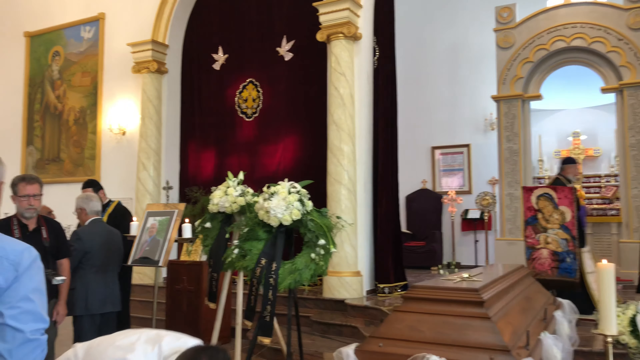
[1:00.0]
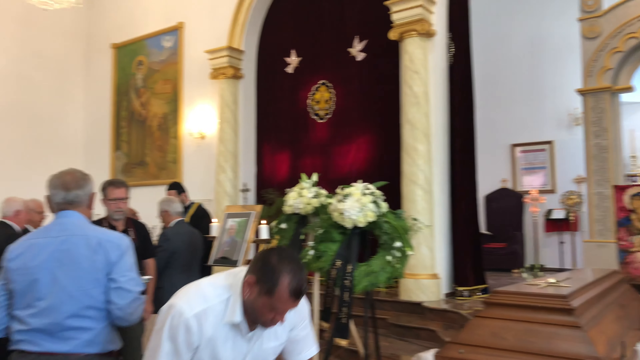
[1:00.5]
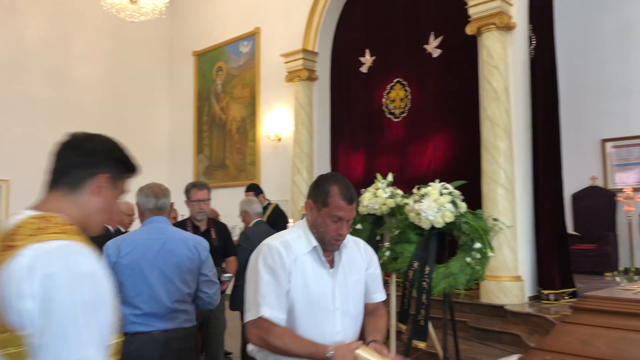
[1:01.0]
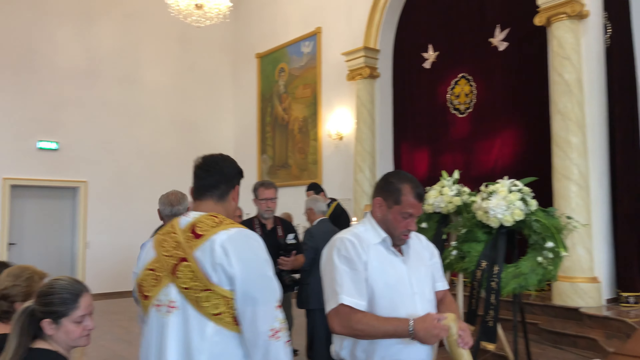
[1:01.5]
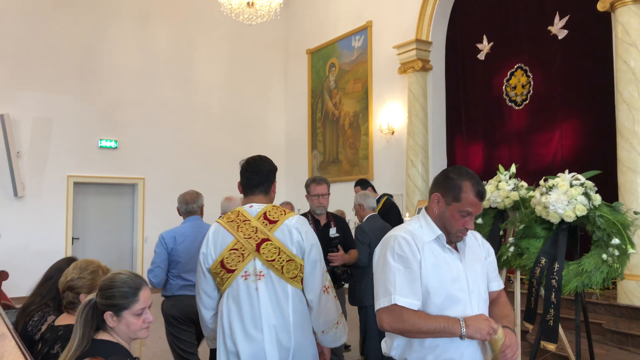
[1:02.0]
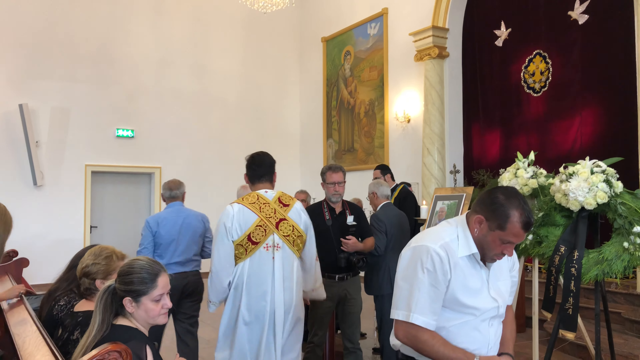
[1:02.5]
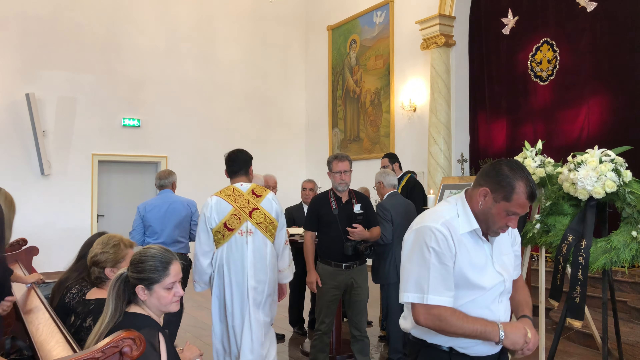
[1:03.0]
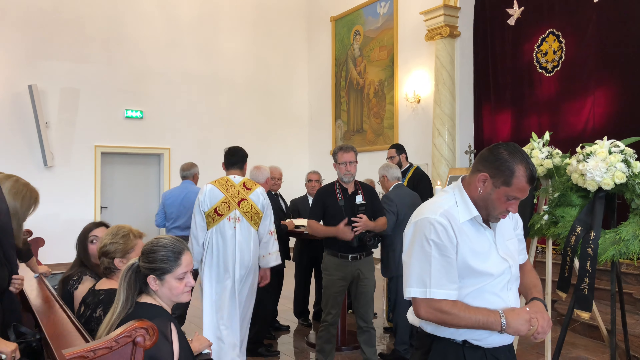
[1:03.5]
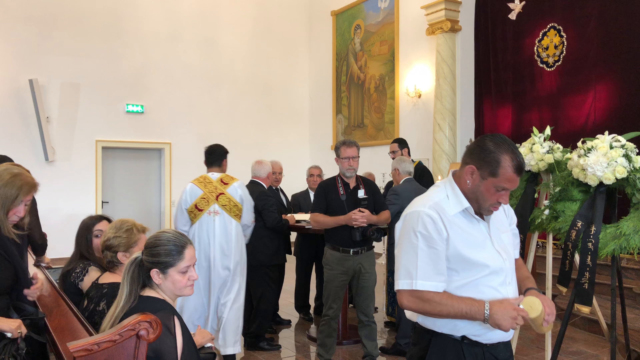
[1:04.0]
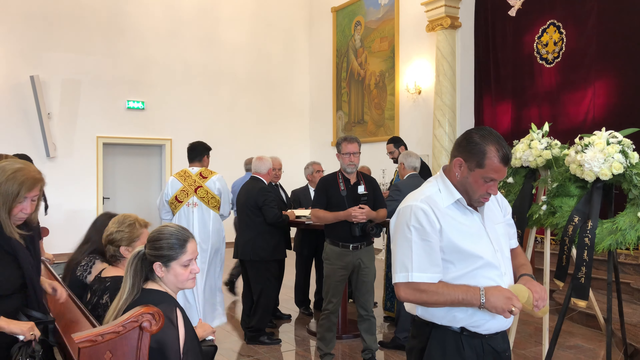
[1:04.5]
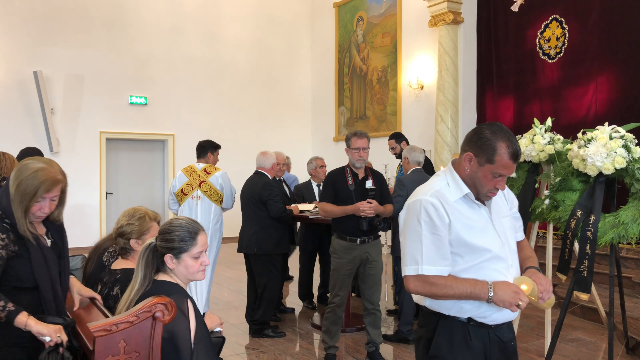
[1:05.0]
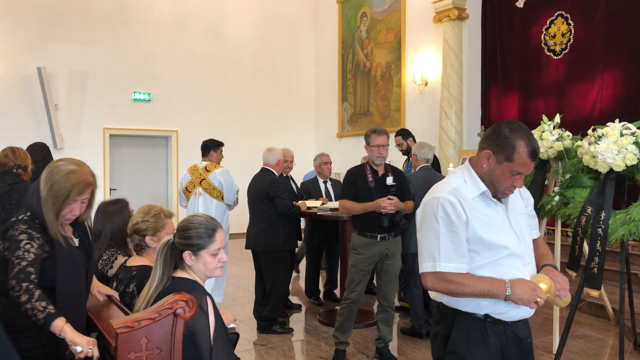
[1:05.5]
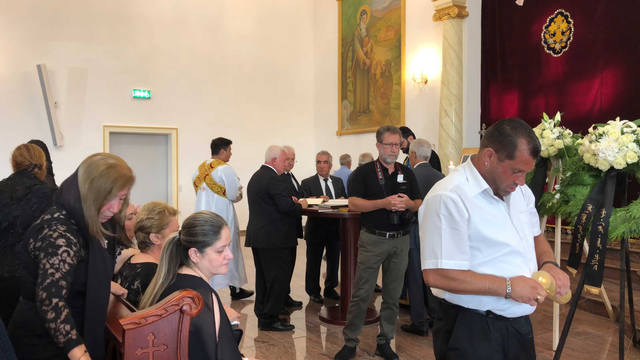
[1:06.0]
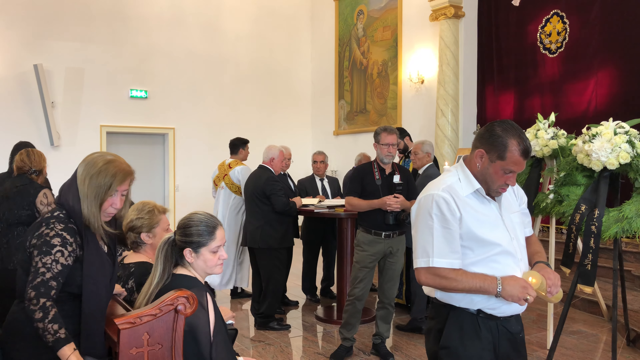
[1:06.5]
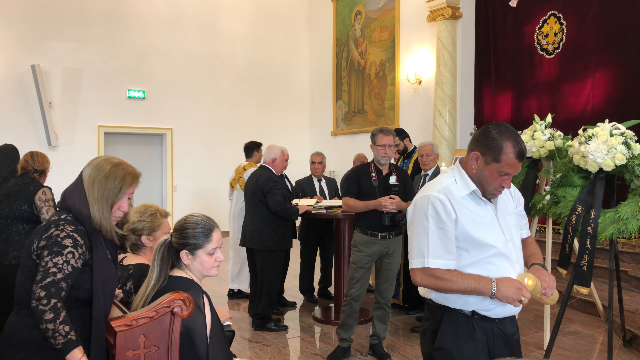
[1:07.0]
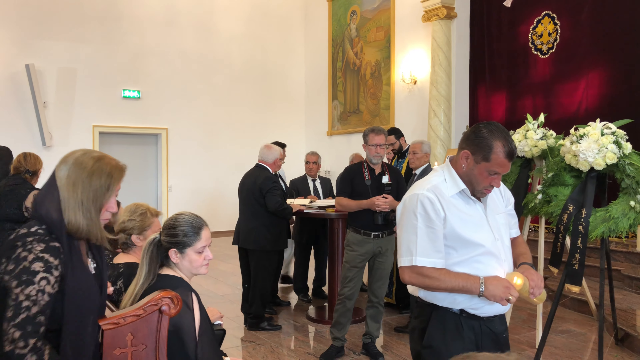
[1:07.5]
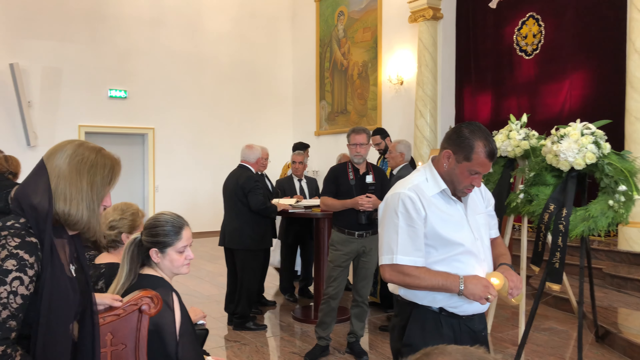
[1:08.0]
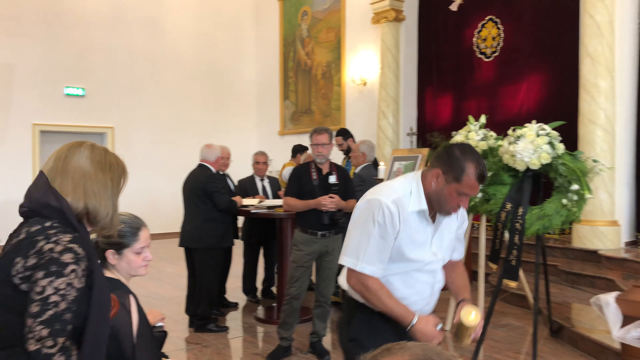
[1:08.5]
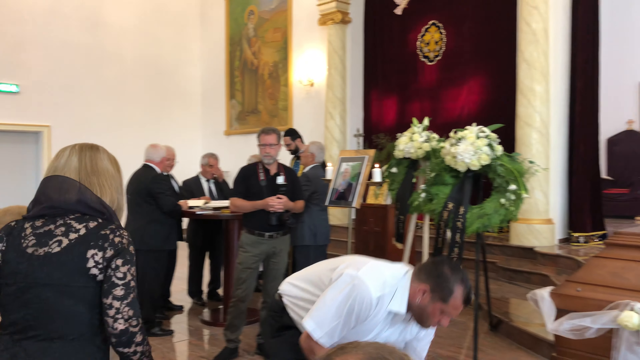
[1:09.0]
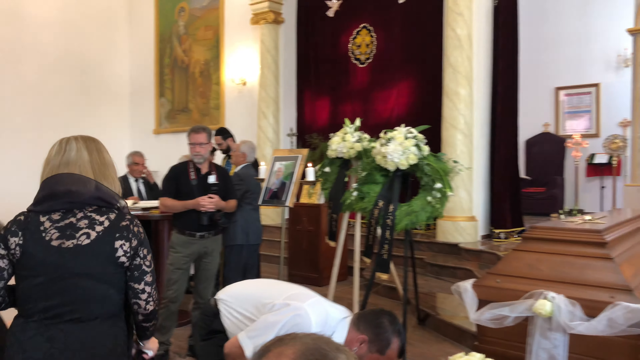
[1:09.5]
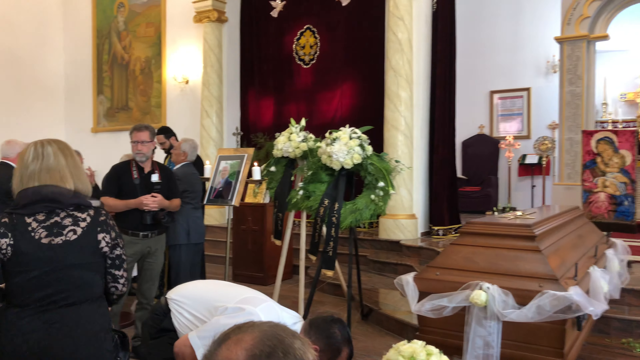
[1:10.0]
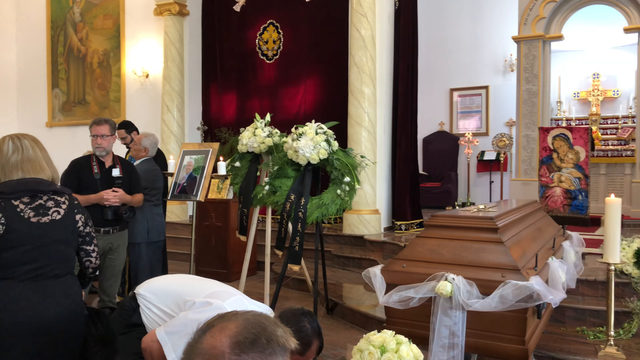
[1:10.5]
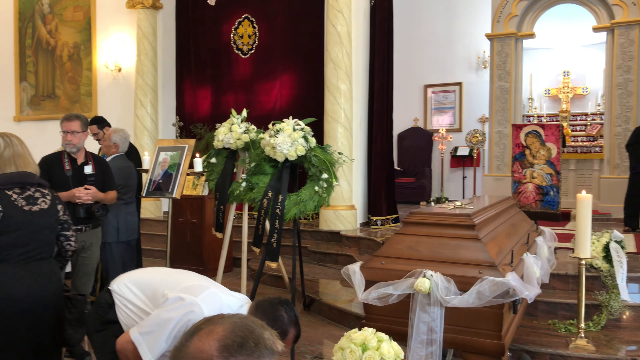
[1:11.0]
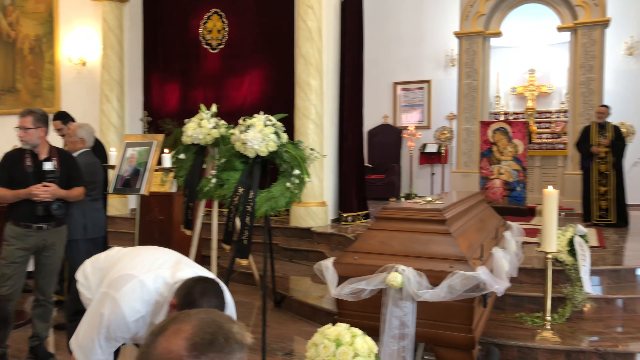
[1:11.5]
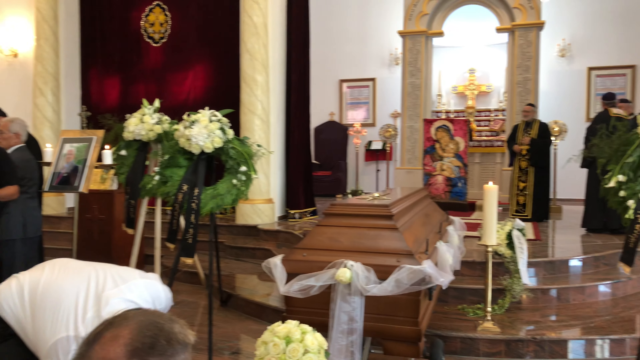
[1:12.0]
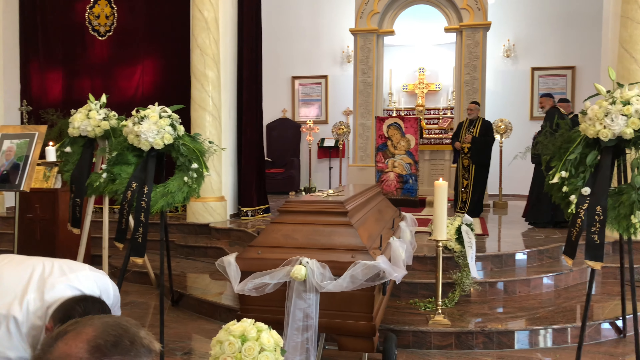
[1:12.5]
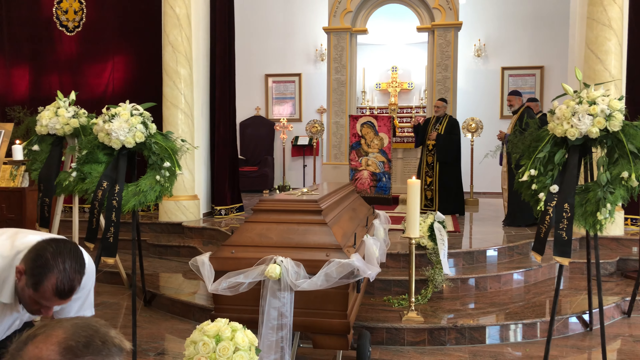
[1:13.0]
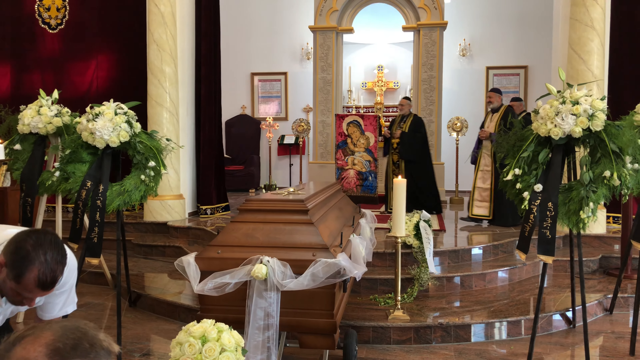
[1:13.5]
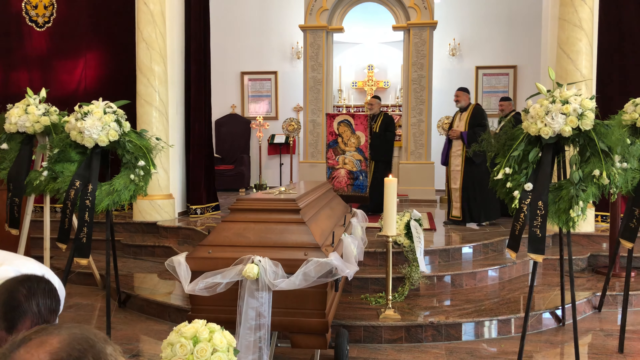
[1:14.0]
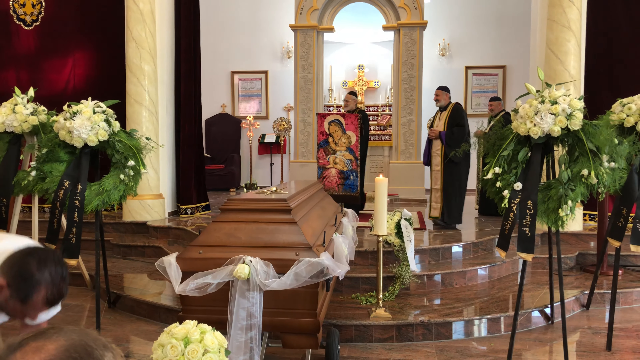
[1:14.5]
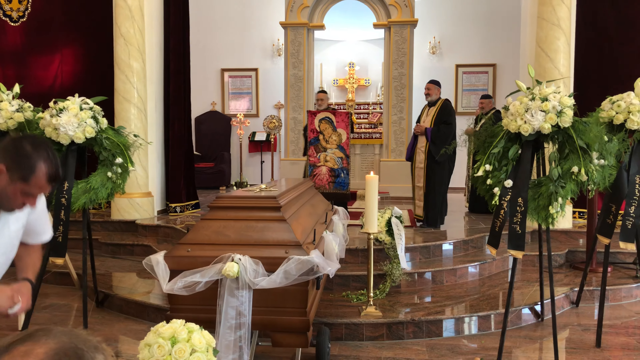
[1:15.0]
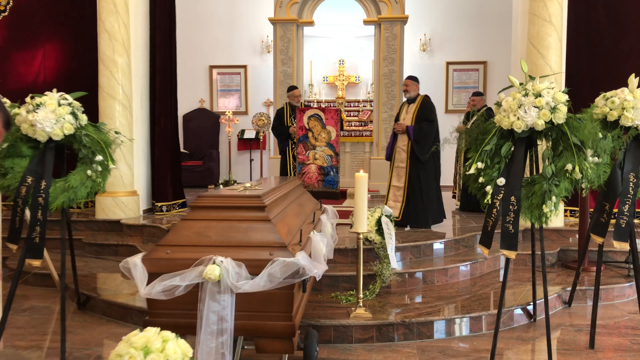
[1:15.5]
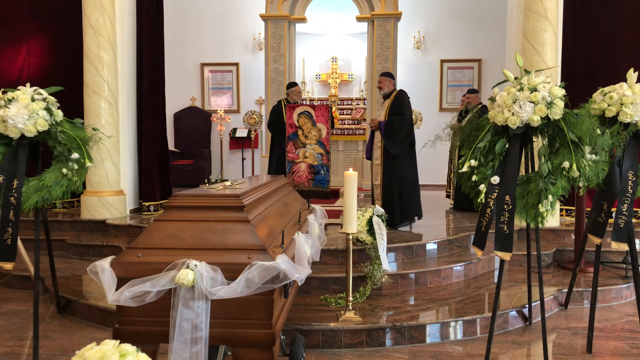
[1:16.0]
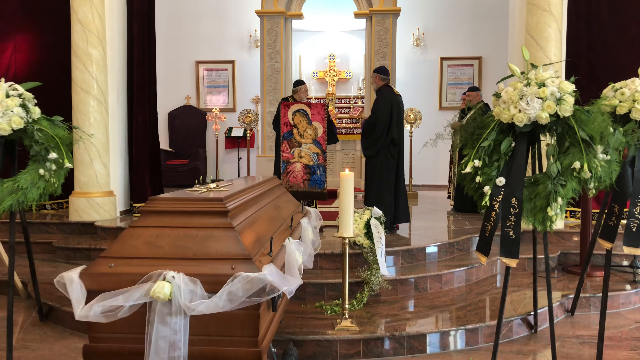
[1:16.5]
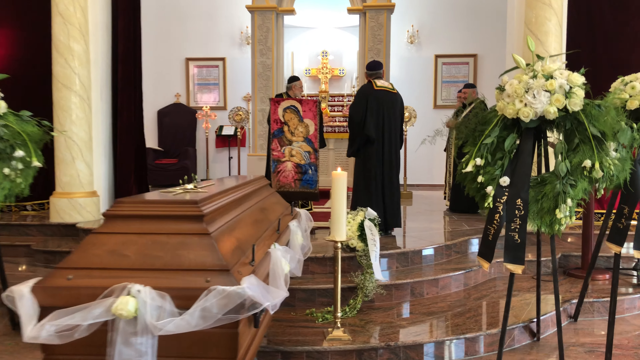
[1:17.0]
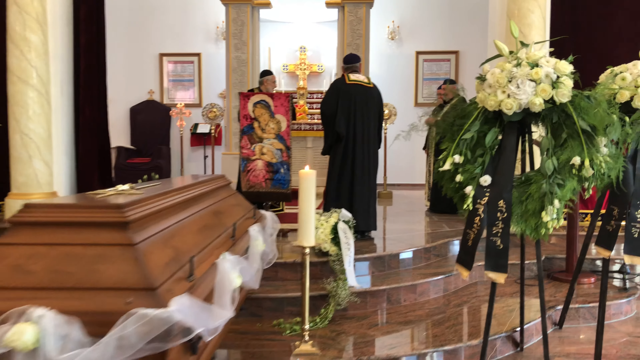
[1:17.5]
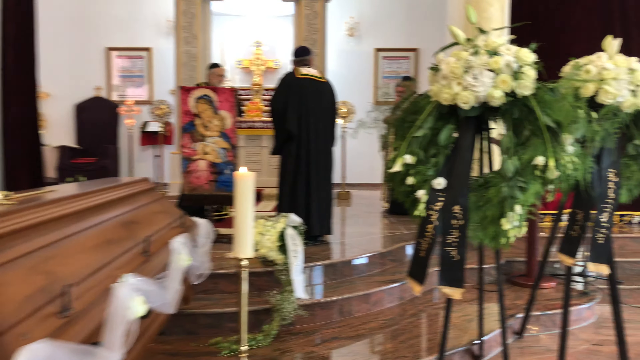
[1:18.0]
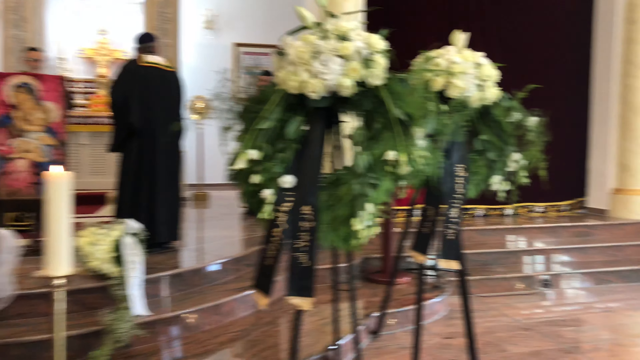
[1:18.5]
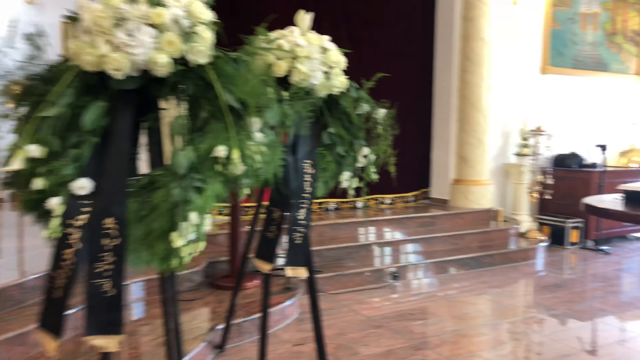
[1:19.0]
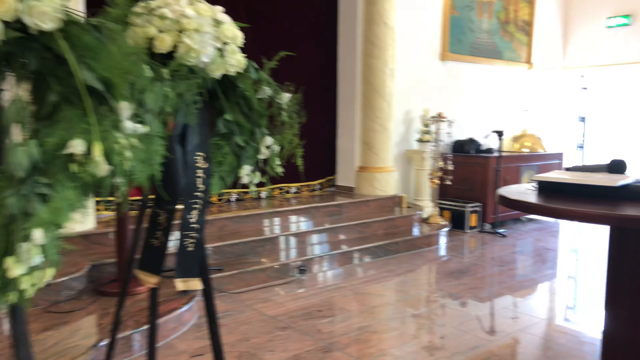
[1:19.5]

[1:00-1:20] People are moving around at the front of the church. There are multiple women dressed in all black, and a group of men stands over to the side, away from the casket, having a discussion. One of the cameramen is there, and the man in the white robe with the yellow sashes walks behind the group of men who are speaking. The view then goes back to the other clergymen up on the stage area, a raised area about three steps up, where three clergymen in black robes are standing. Behind that area is another room with a large lighted cross on the wall as a decoration. The clergymen start walking toward the front area where the casket is located. The camera then pans to the right, showing a table with what appears to be maybe a microphone stand, another table up against the wall, and a very bright light, possibly coming from outside, that might be the church's exit, though the view is blurry and hard to make out.